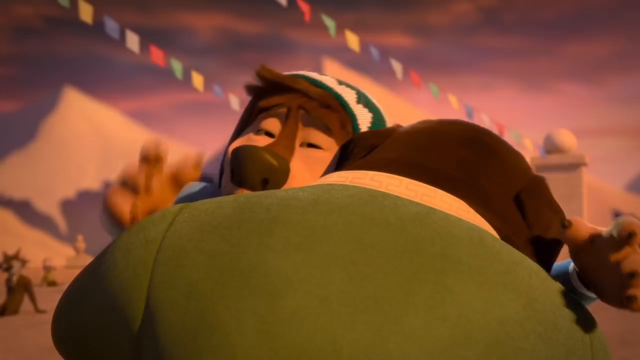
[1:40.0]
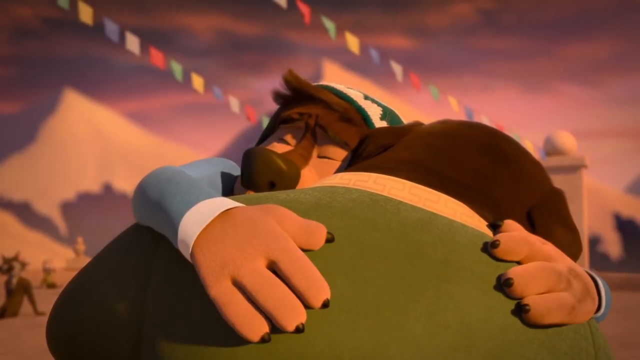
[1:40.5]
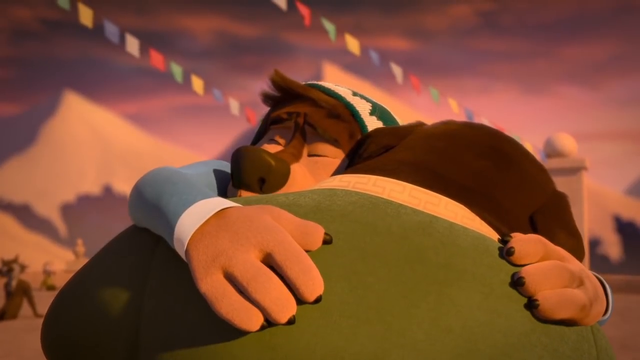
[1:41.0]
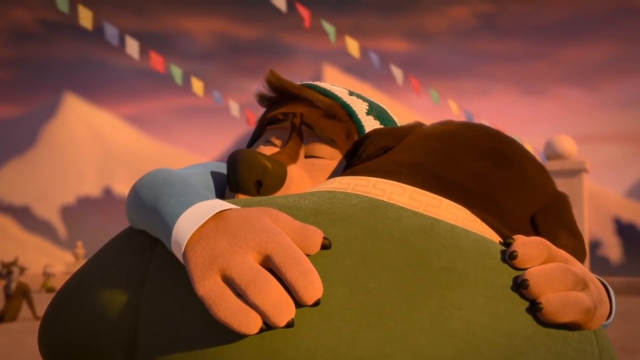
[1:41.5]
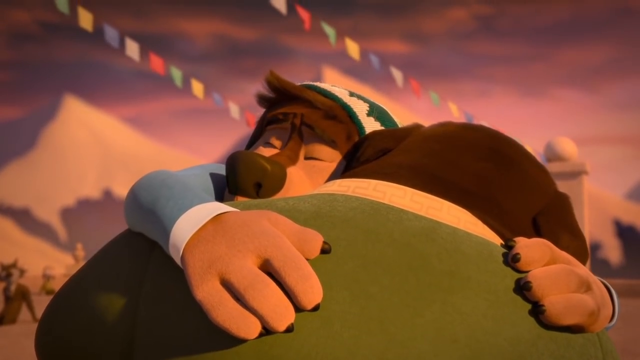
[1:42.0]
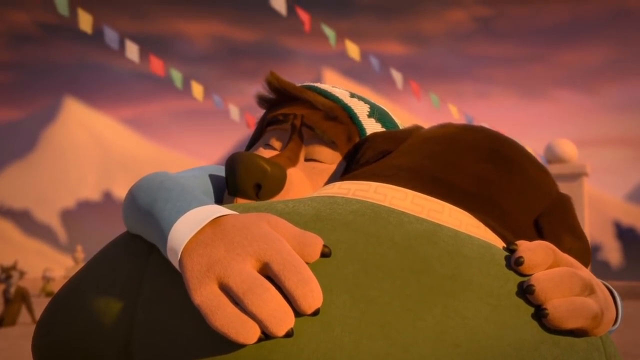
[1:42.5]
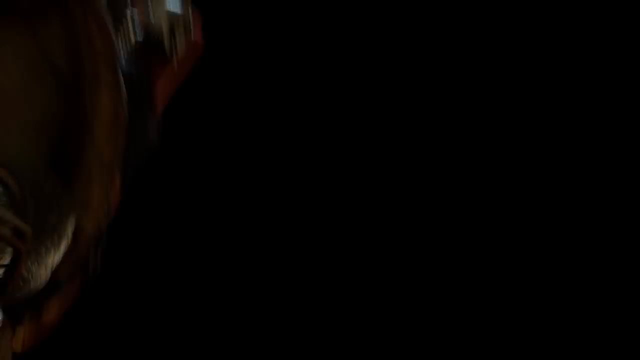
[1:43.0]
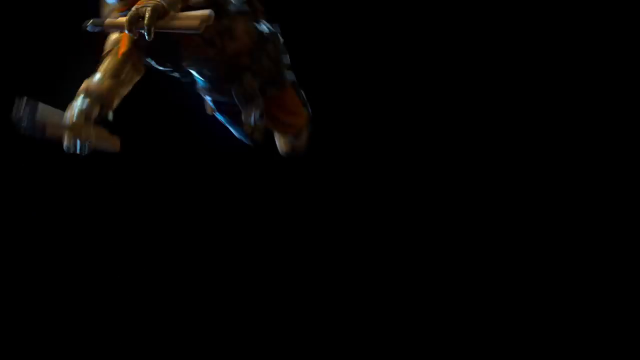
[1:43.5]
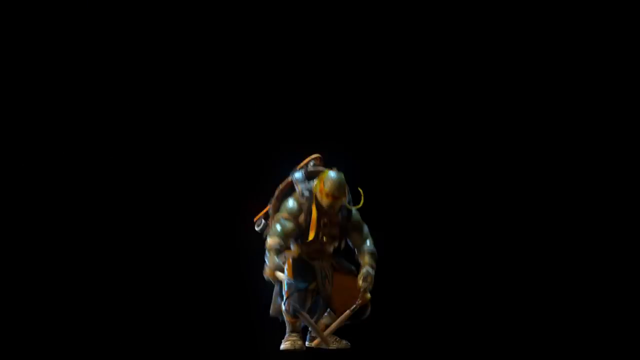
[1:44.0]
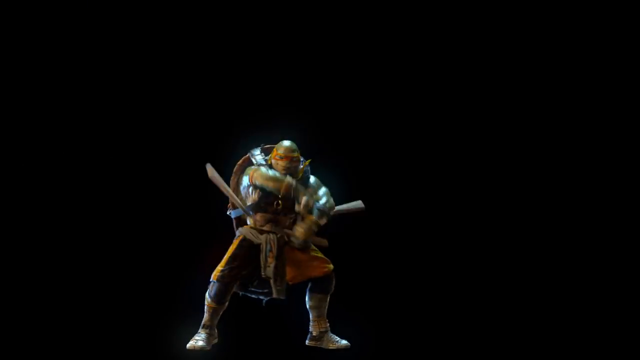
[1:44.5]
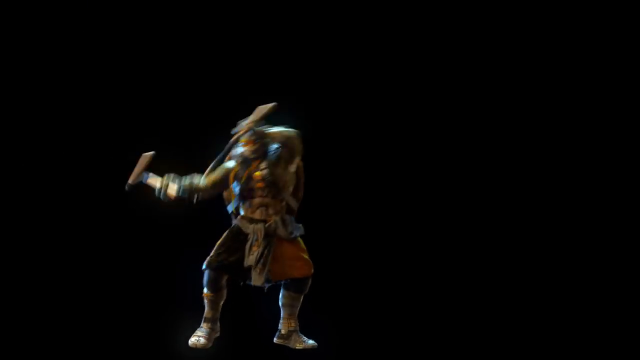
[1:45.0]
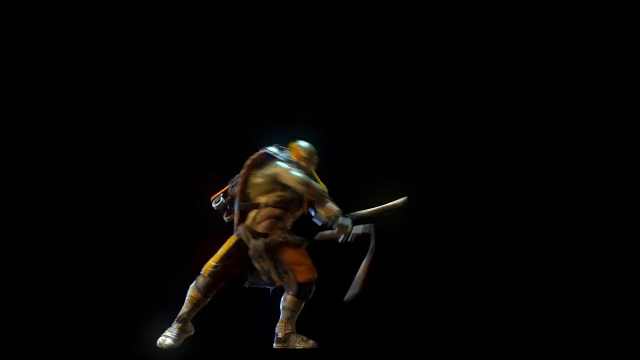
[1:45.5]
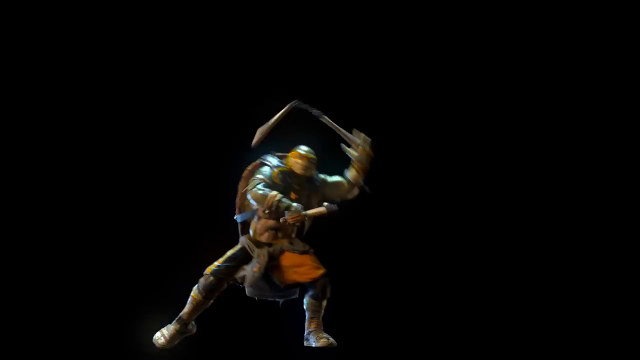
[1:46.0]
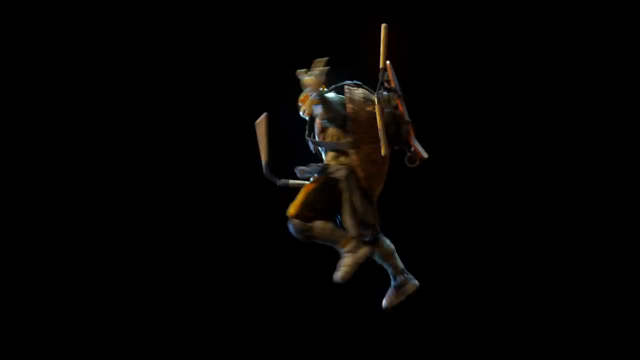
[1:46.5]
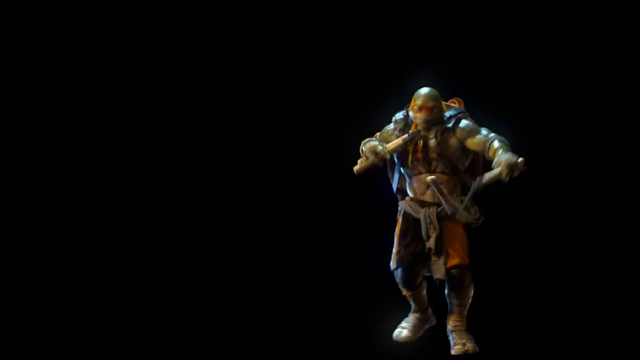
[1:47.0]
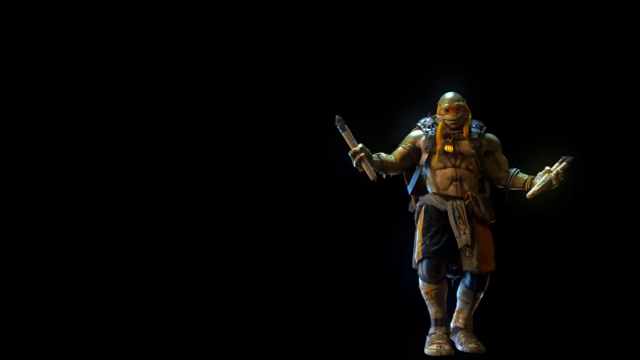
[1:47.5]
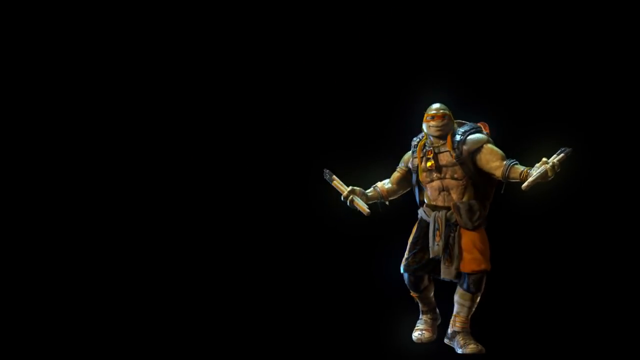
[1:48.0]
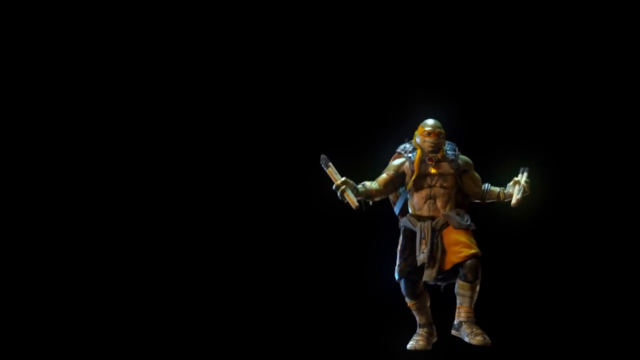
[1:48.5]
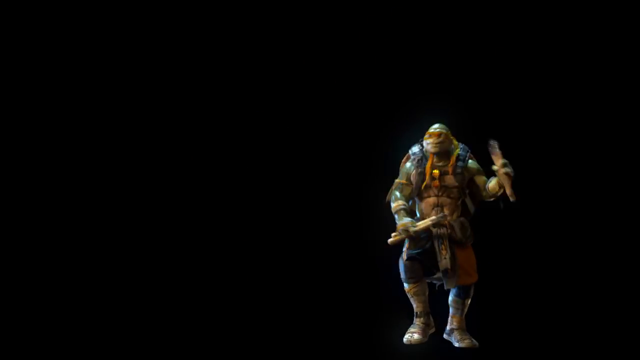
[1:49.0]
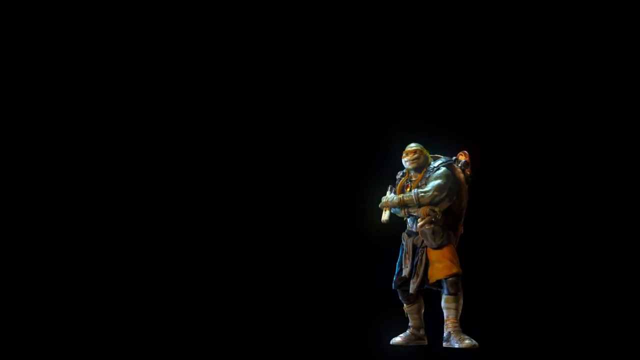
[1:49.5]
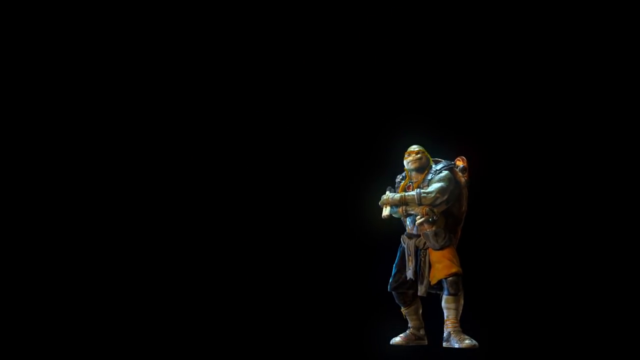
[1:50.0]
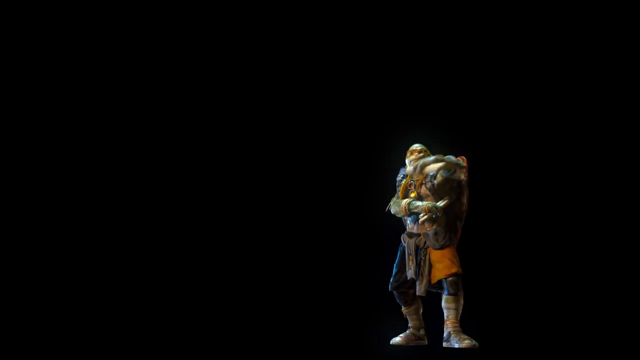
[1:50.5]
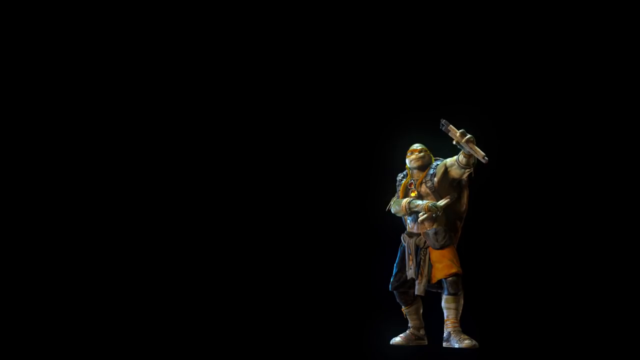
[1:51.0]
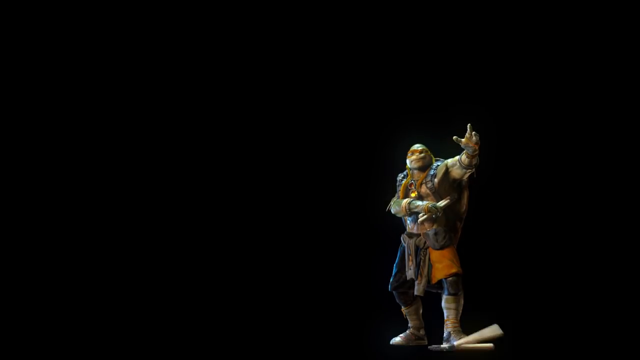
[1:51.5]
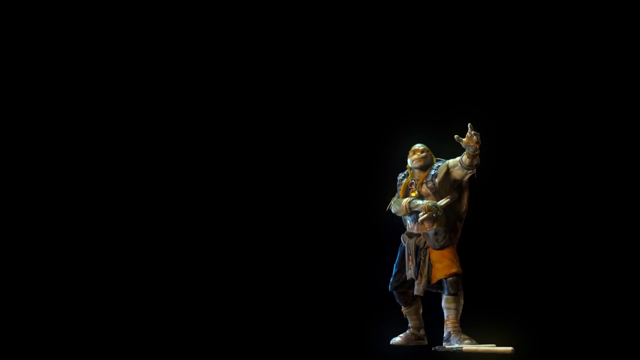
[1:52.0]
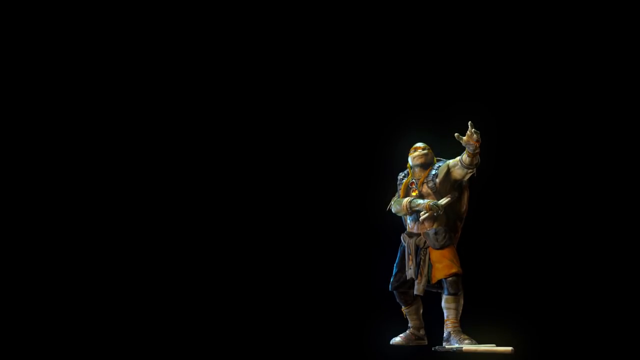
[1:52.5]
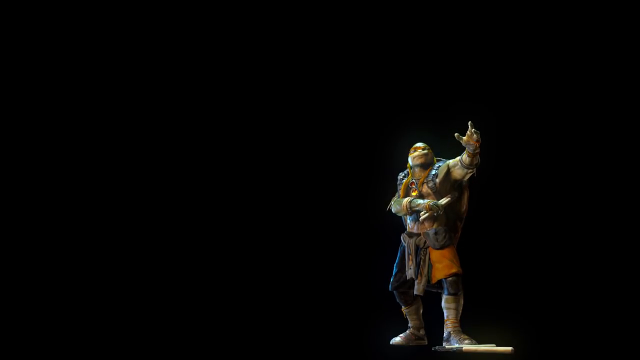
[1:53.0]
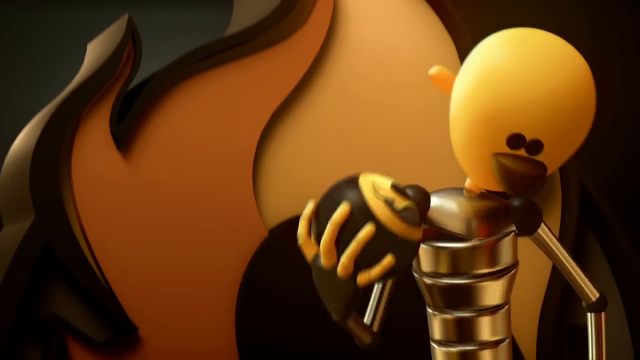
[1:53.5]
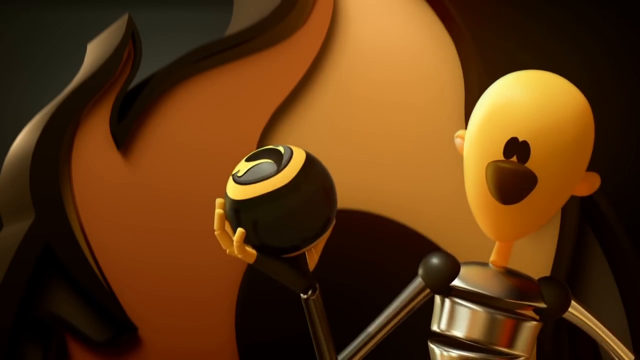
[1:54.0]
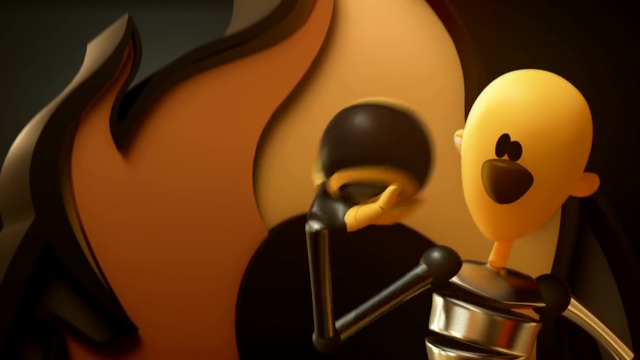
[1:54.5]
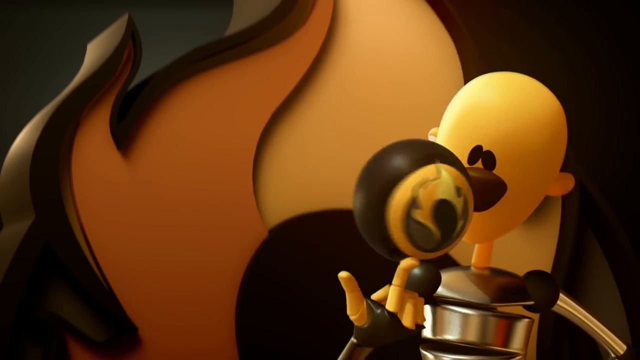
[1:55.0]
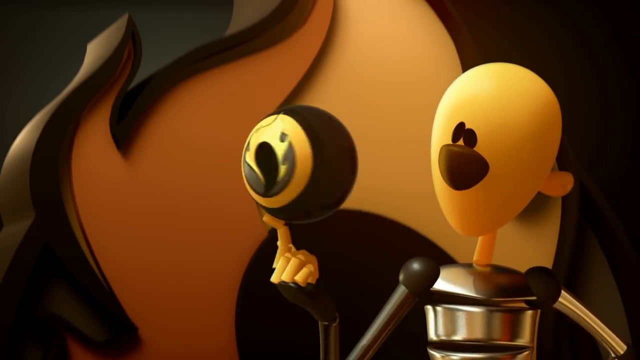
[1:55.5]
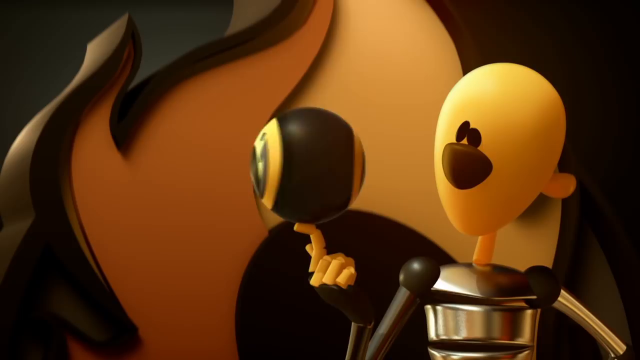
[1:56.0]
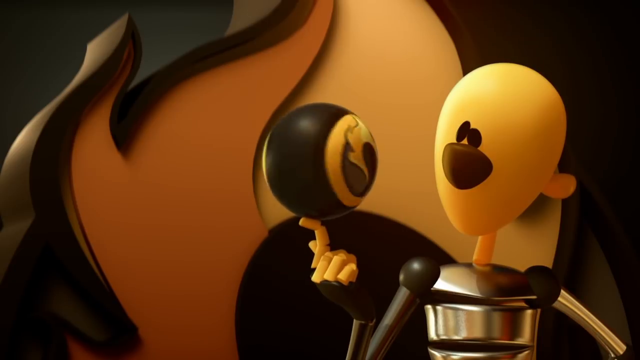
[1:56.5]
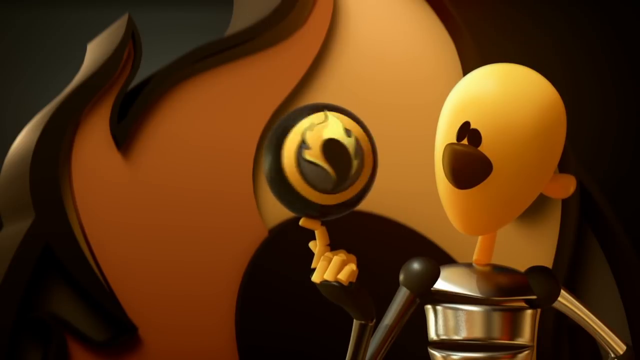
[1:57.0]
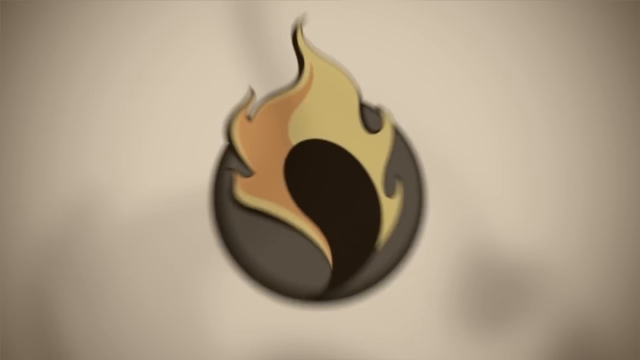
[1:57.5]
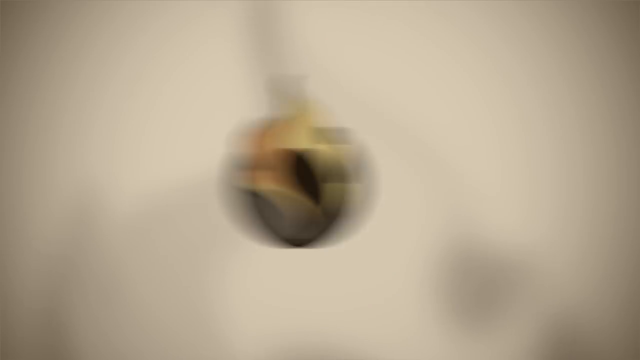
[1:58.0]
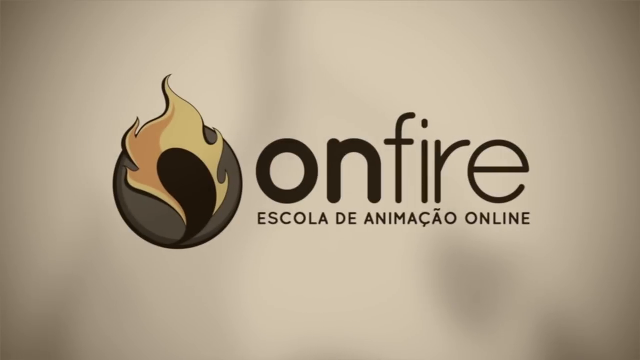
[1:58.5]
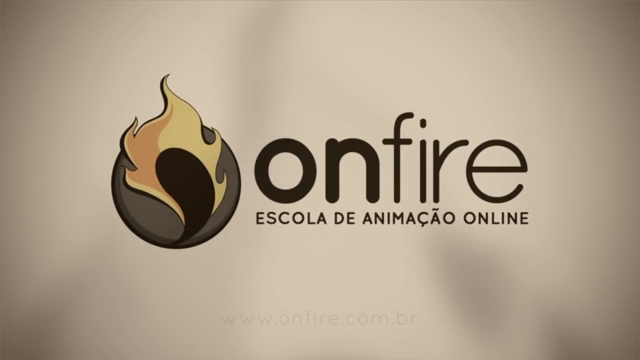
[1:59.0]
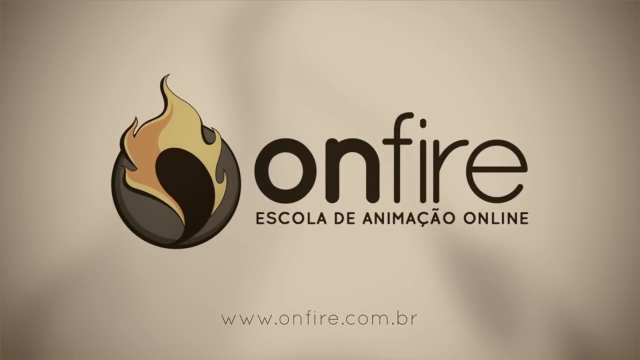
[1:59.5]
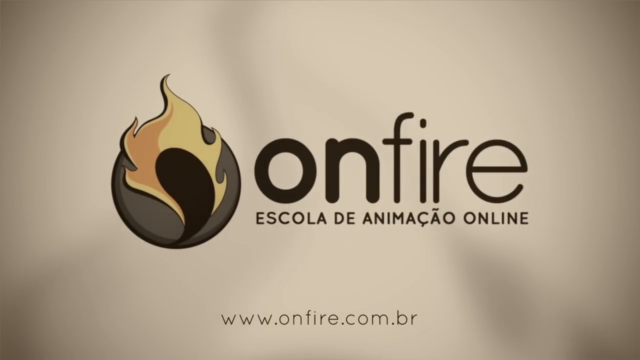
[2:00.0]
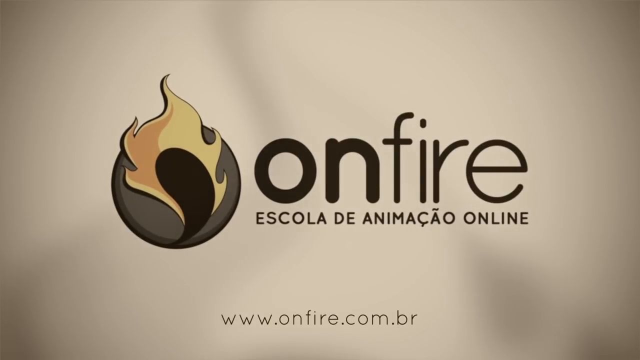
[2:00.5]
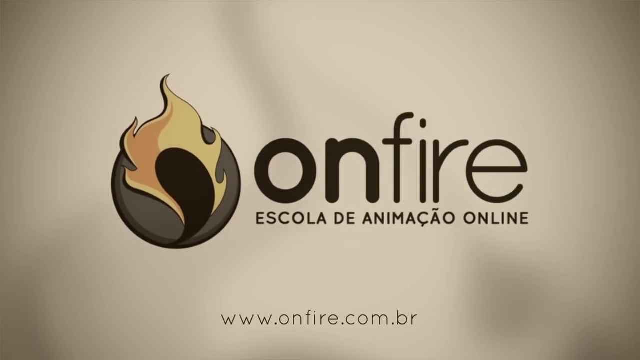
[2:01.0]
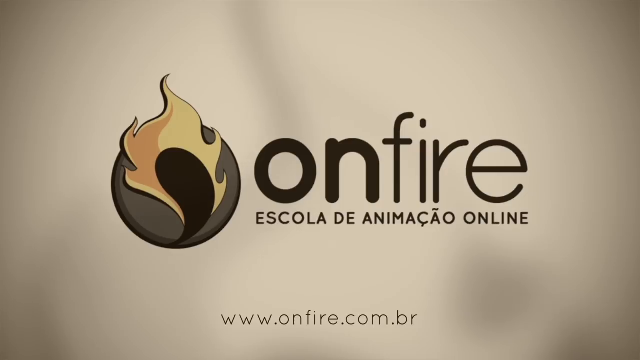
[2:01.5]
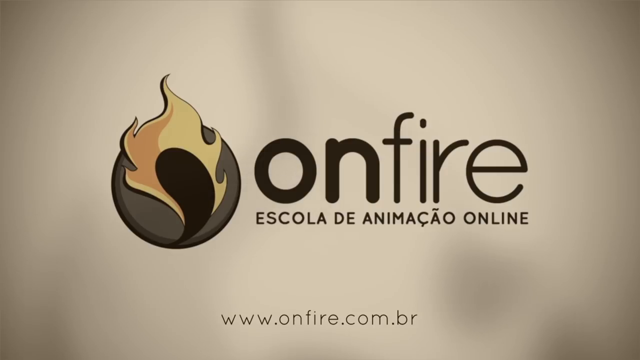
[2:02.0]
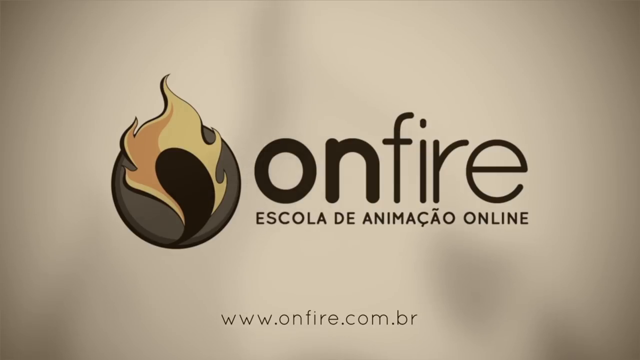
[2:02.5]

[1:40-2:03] The musician dog represented by the sleek cat stands hugging a big, brawny-looking dog. Both of their faces show contentment and longing, as if this is the start of a long-awaited reunion. The scene suddenly changes to a shirtless ninja turtle doing ninja tricks, flipping all over, with nunchucks in each hand. He dances and appears to have a yellow bandana on his head. He drops the nunchucks. The scene then changes to an animated character spinning a ball that says "On fire! Escola de Enemigo!"